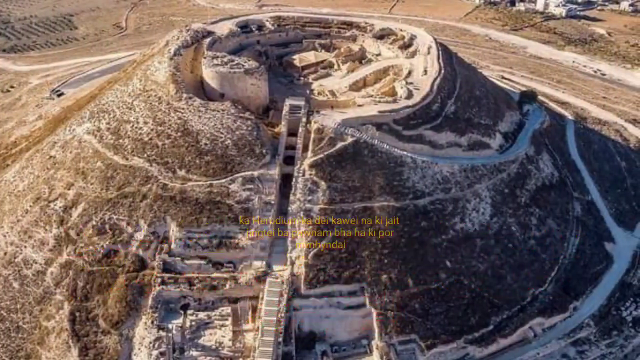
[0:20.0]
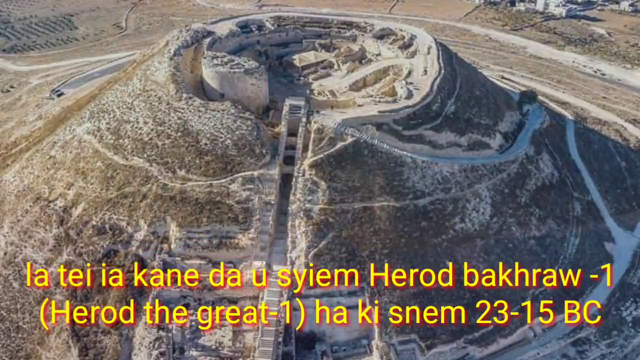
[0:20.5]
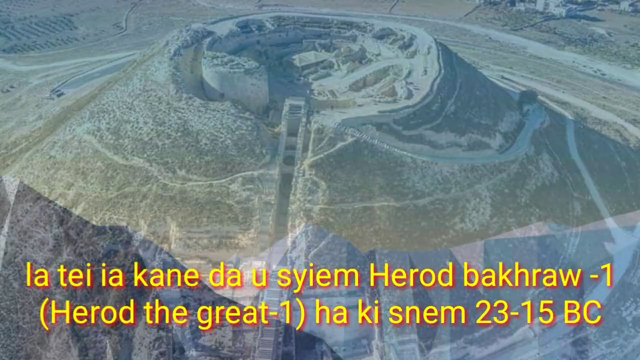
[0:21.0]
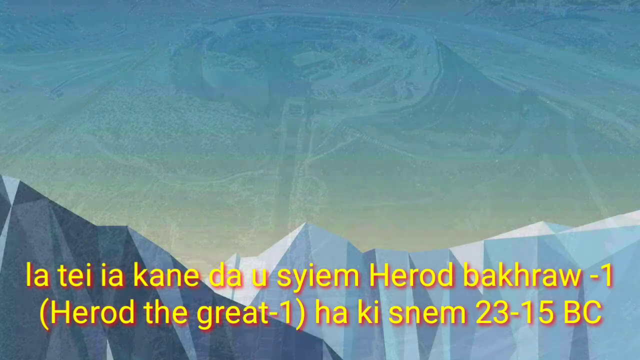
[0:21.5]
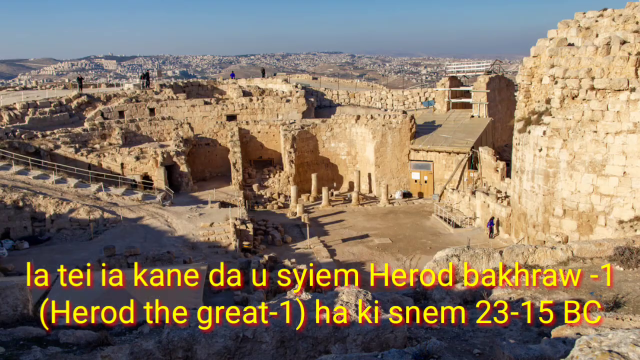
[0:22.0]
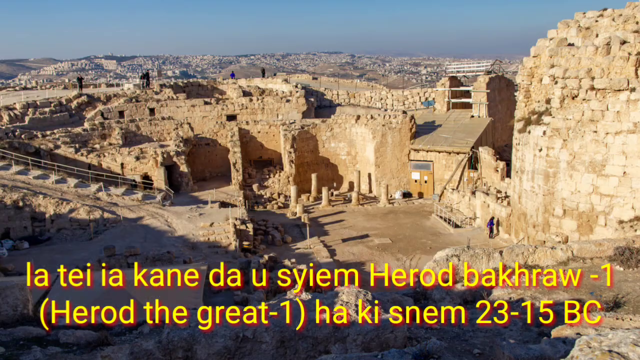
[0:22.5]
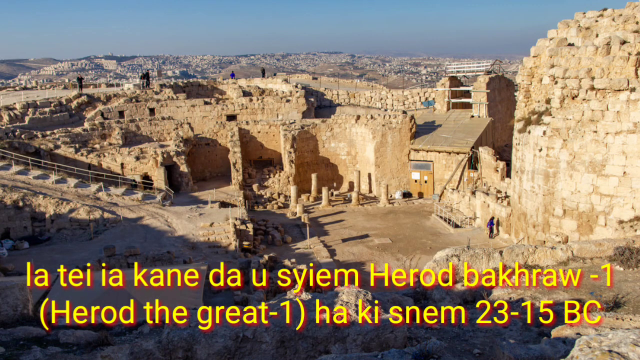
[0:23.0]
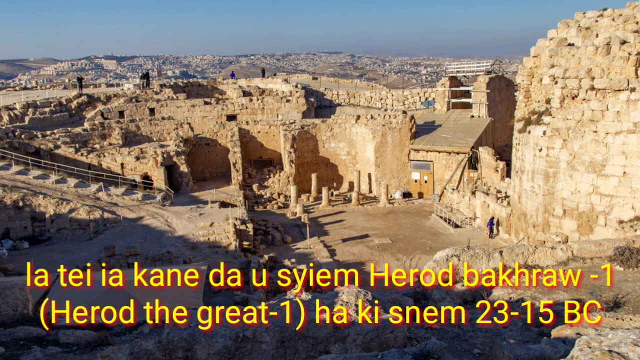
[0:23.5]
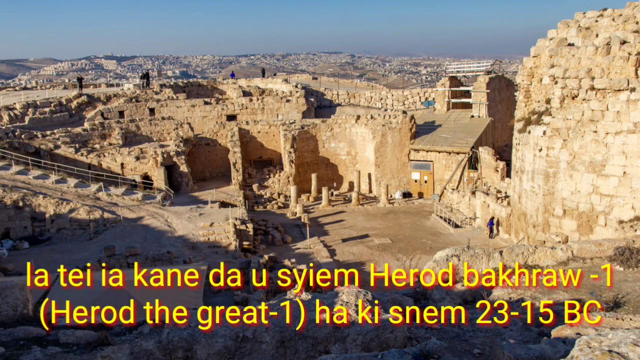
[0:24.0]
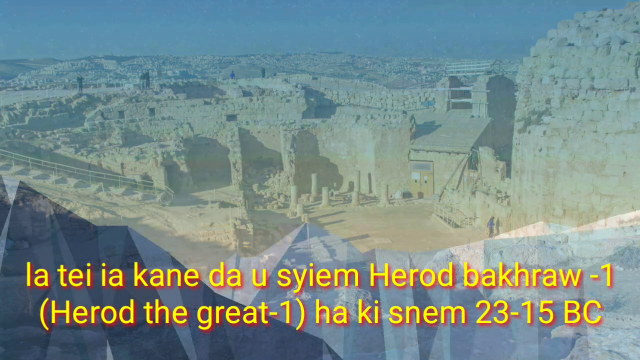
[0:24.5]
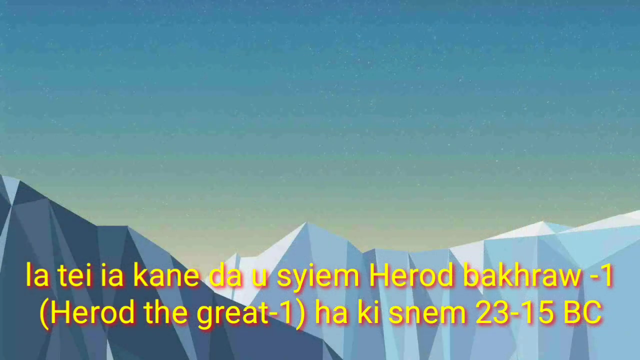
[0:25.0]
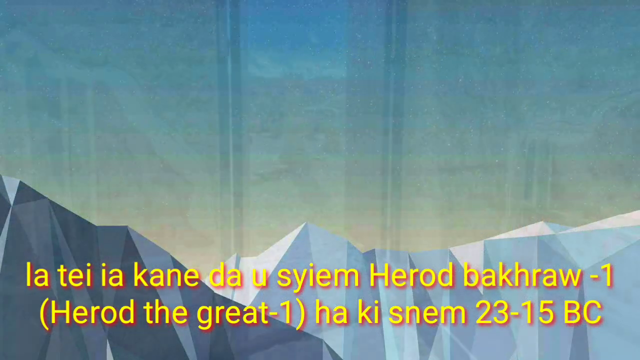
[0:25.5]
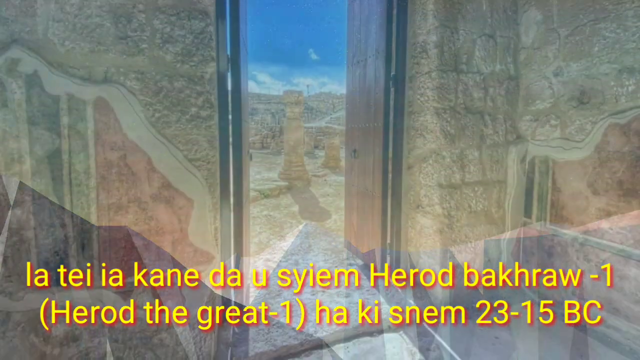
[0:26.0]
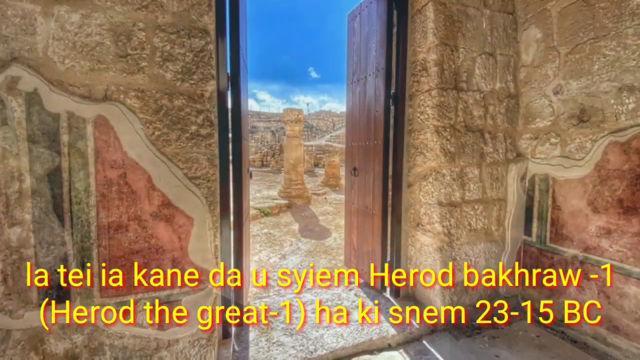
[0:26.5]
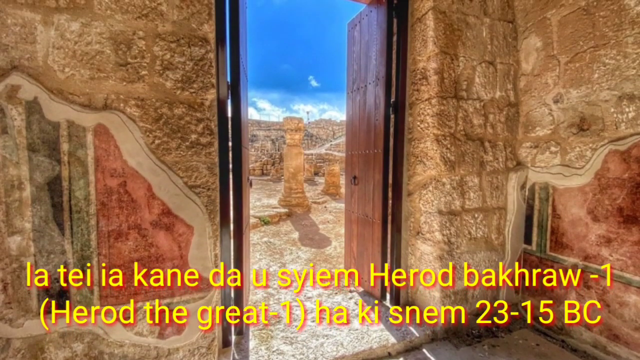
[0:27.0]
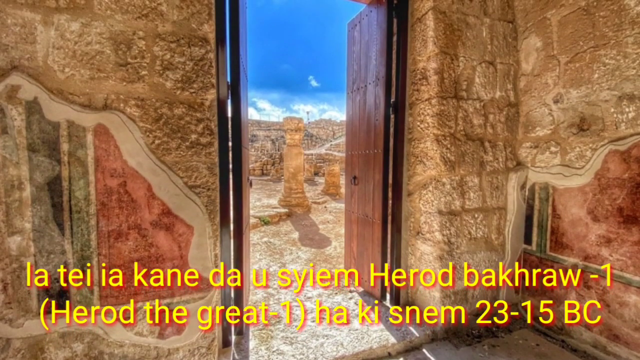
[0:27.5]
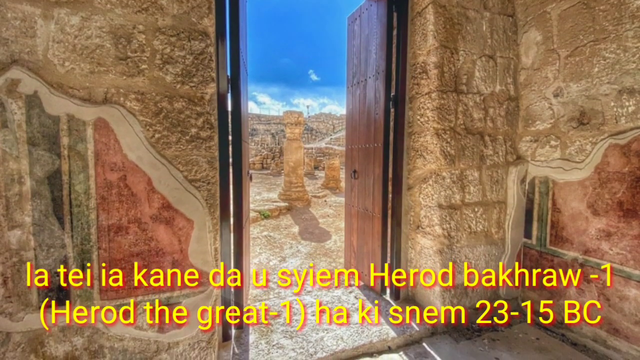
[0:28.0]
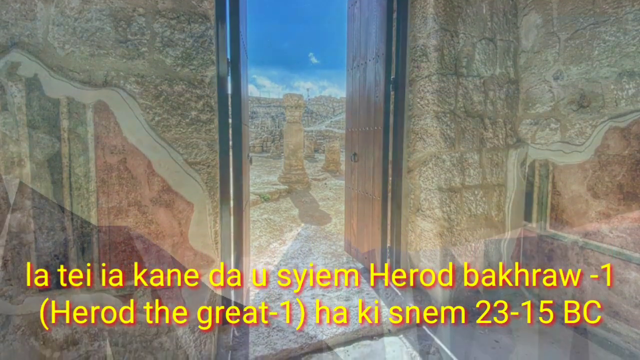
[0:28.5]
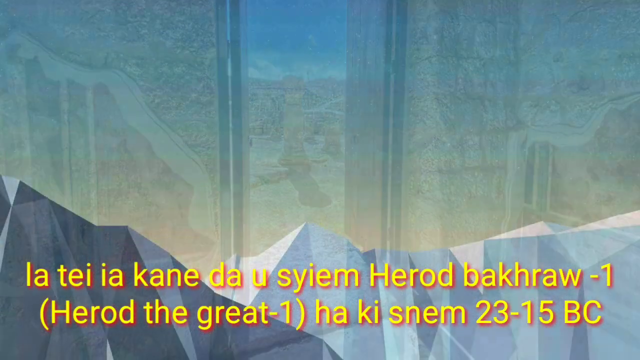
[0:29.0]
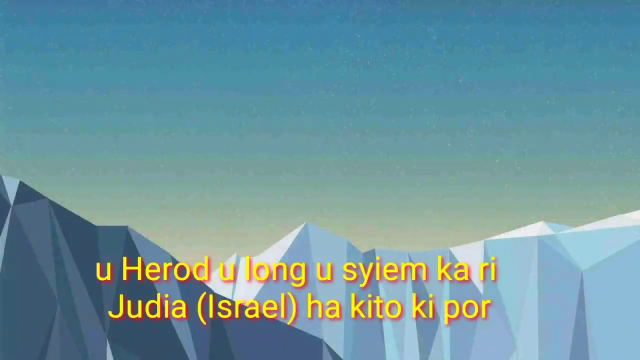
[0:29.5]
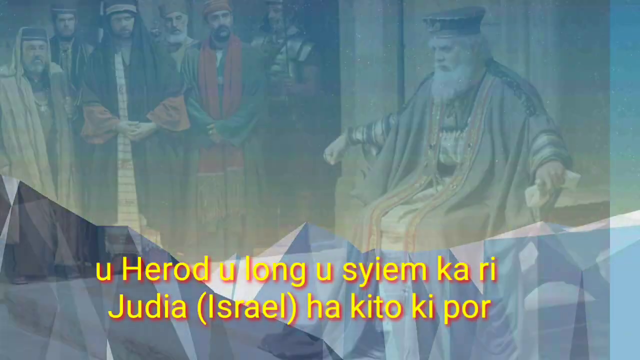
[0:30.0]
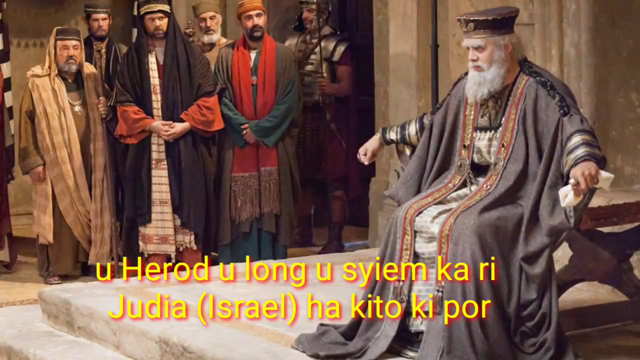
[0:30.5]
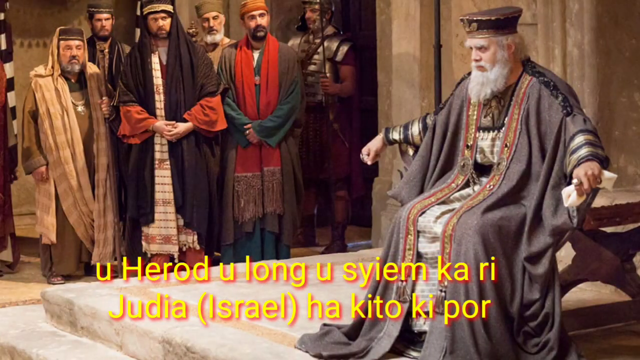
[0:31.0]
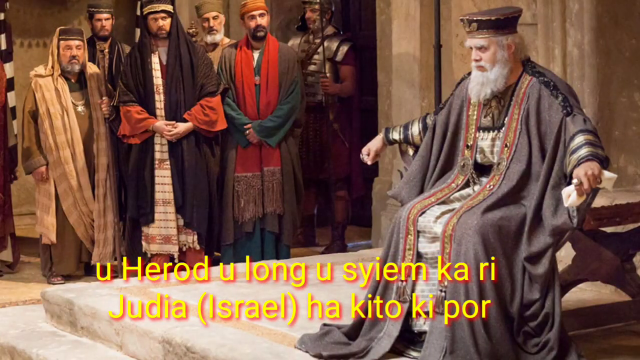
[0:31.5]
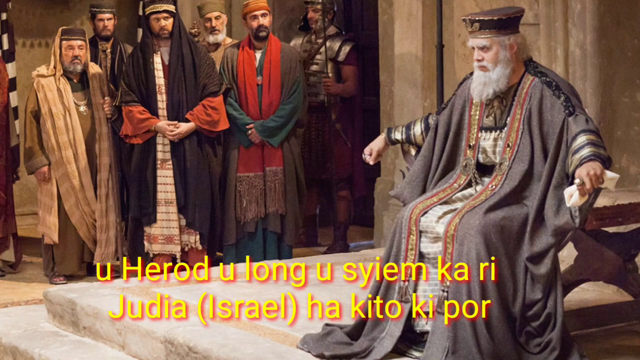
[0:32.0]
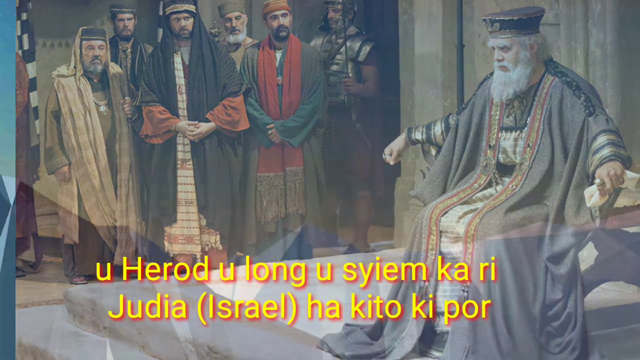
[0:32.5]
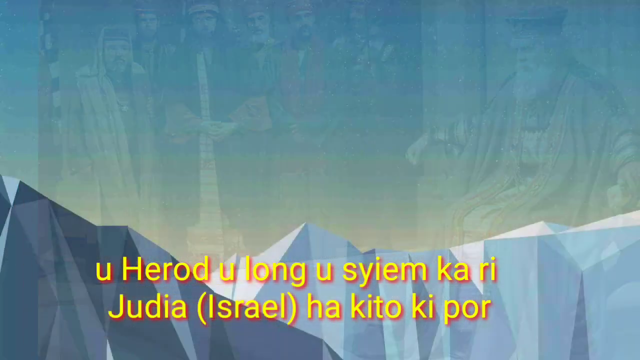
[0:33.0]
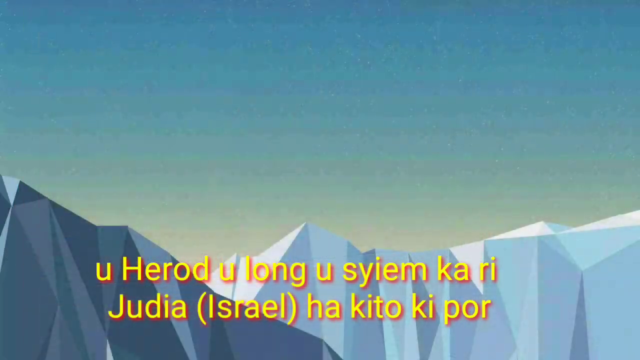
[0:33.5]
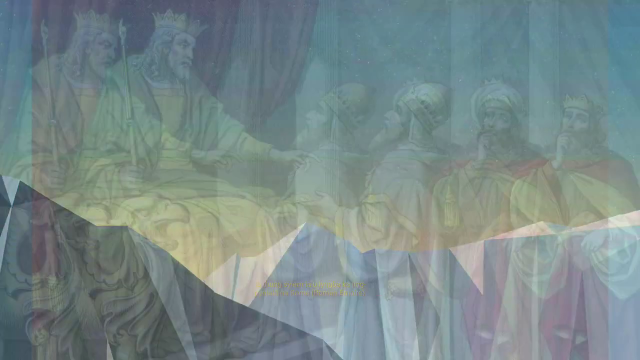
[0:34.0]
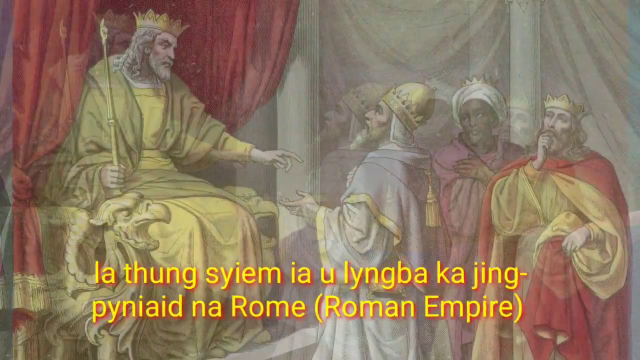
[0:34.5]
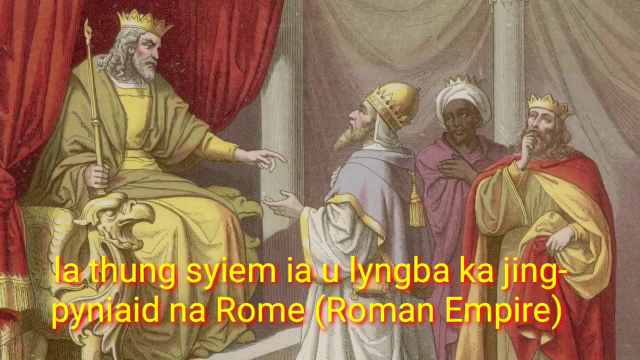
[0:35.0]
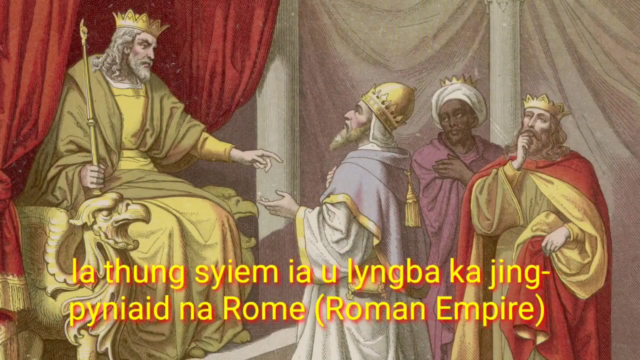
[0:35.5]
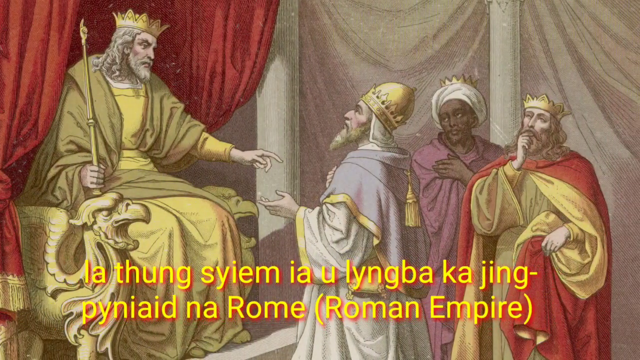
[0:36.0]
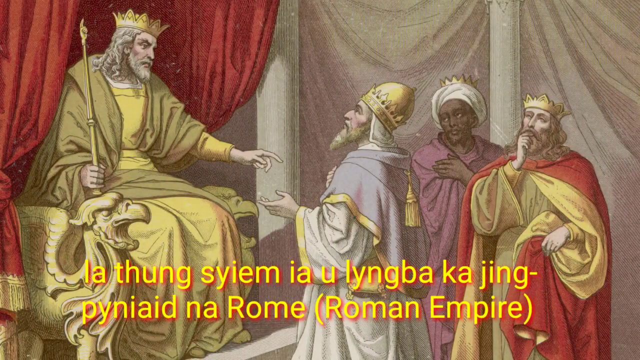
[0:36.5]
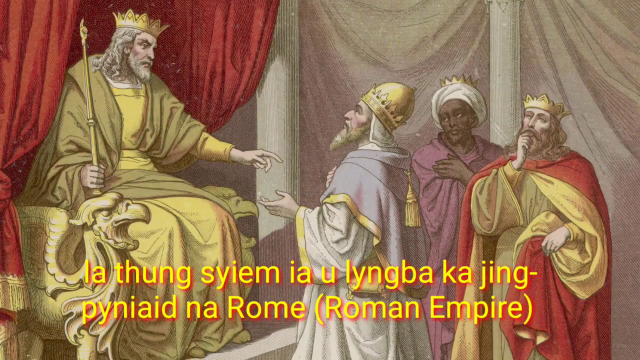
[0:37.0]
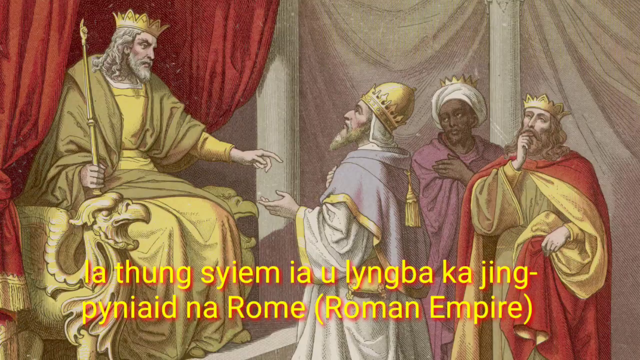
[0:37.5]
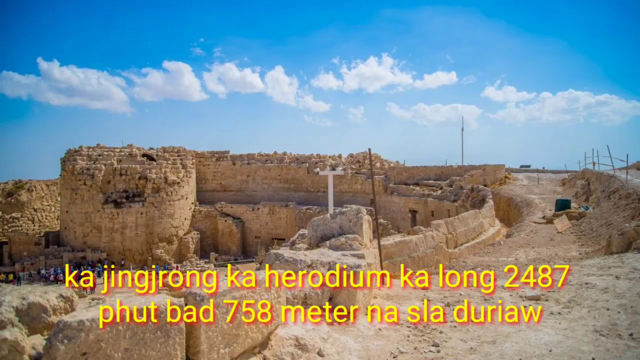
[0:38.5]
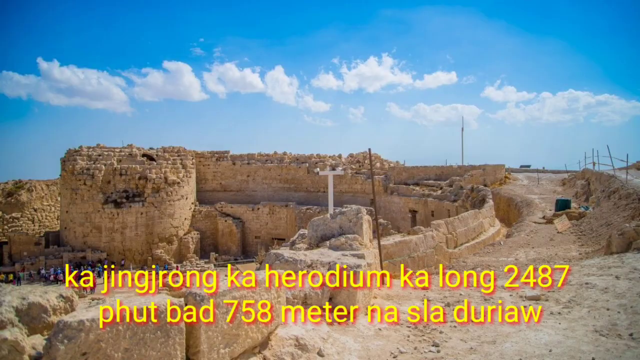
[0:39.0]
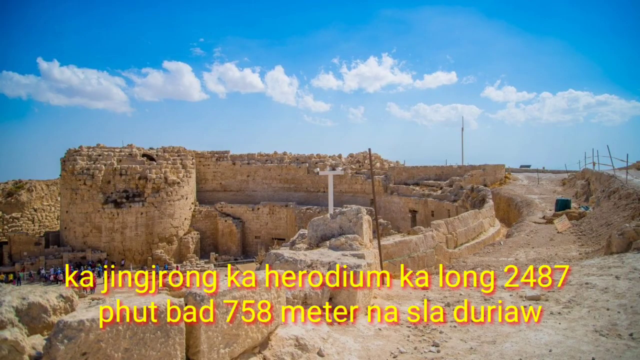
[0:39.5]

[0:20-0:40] Another static image shows a very tan and brown structure built of bricks that are likely made of clay or dried mud. The text continues at the bottom. Images keep fading out and new ones take their place in a steady stream. Next is an image of what appears to be a painting of an old man sitting on a chair. He has a white beard and a weird hat, wears a robe, and has rings on his fingers. In the background several men stand; they also wear weird hats and are covered head to toe in long robes. The text continues to appear throughout.